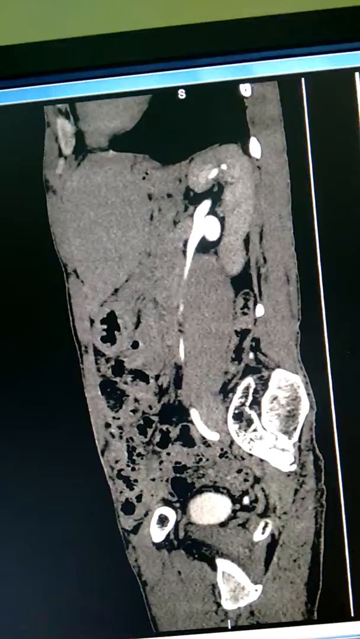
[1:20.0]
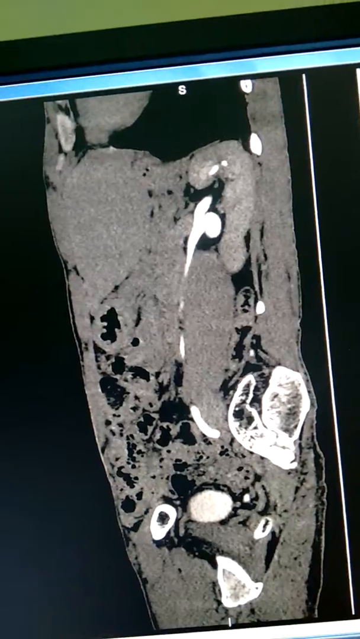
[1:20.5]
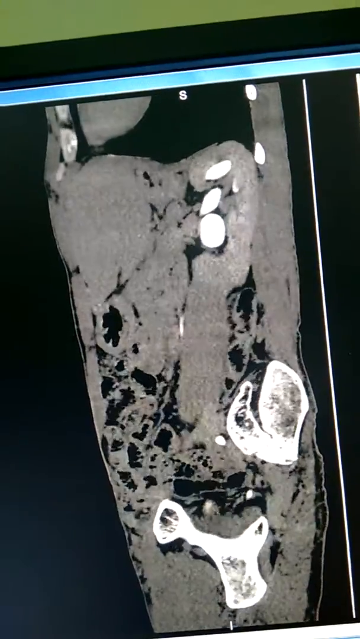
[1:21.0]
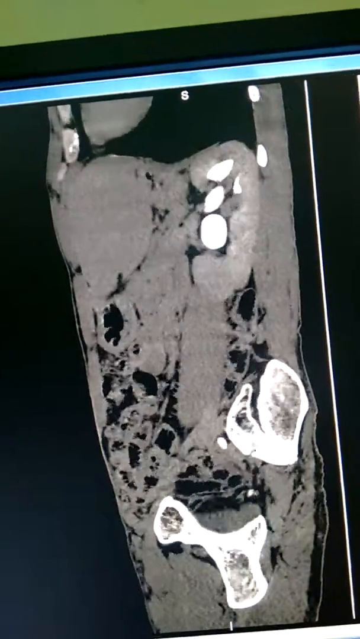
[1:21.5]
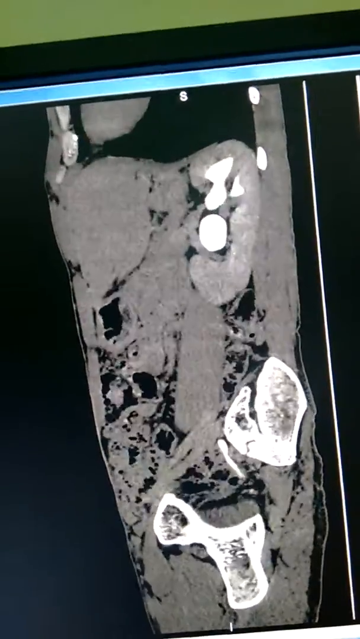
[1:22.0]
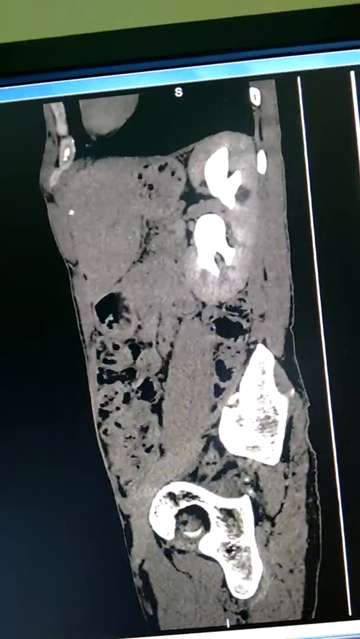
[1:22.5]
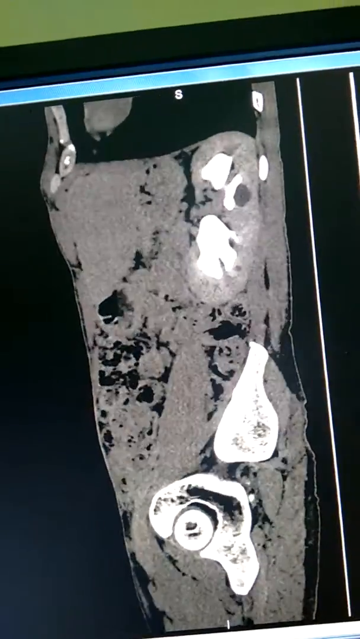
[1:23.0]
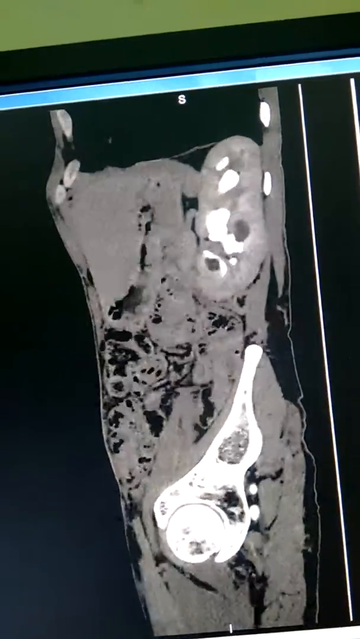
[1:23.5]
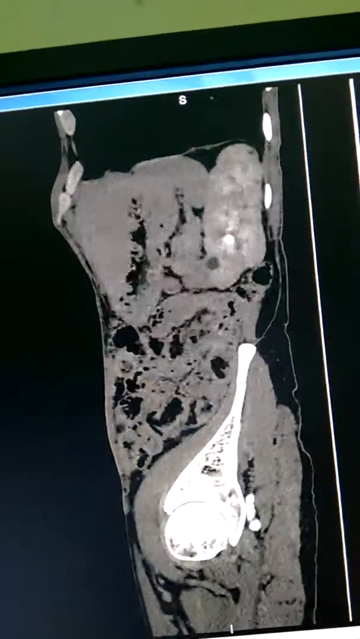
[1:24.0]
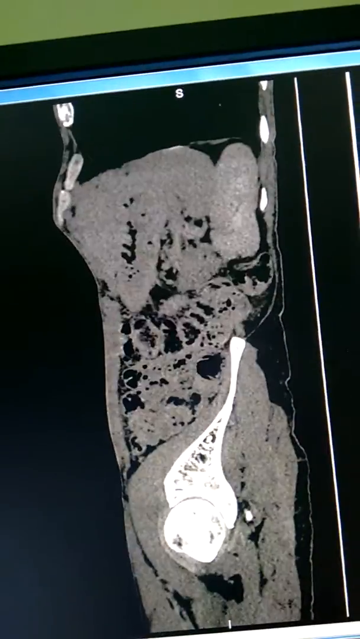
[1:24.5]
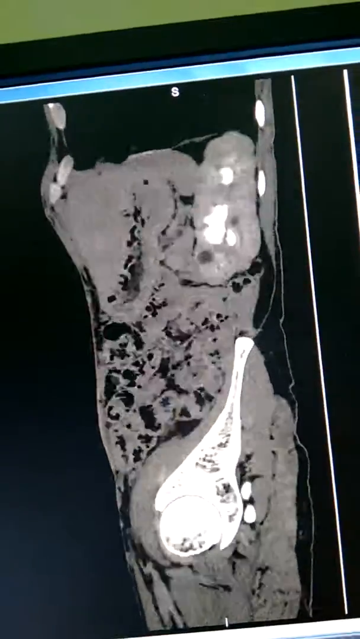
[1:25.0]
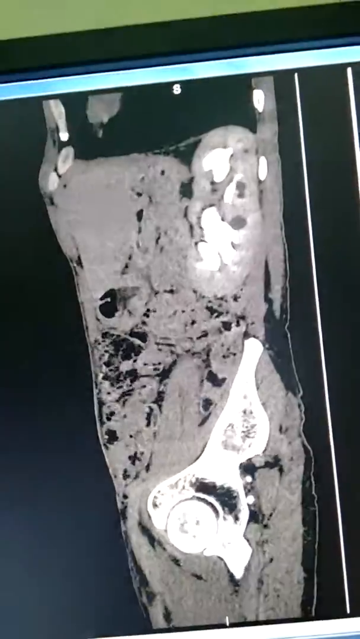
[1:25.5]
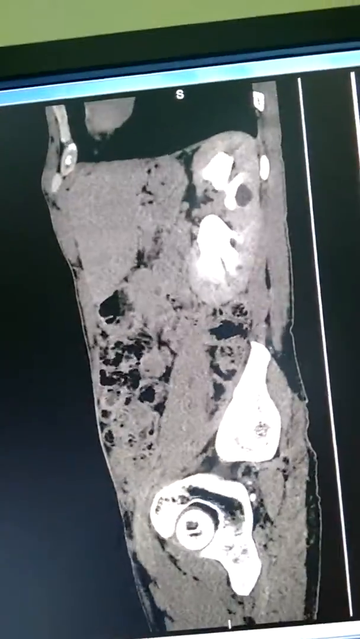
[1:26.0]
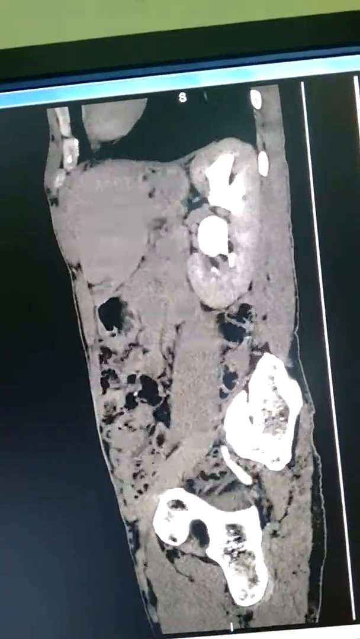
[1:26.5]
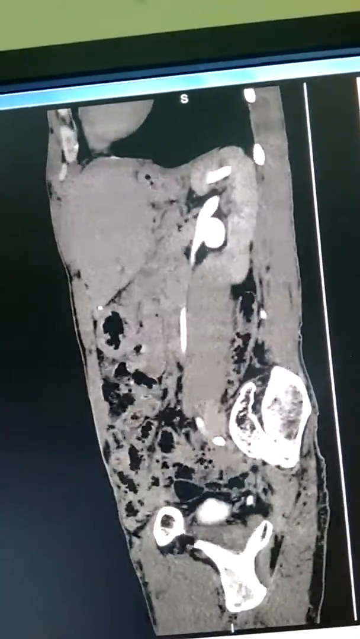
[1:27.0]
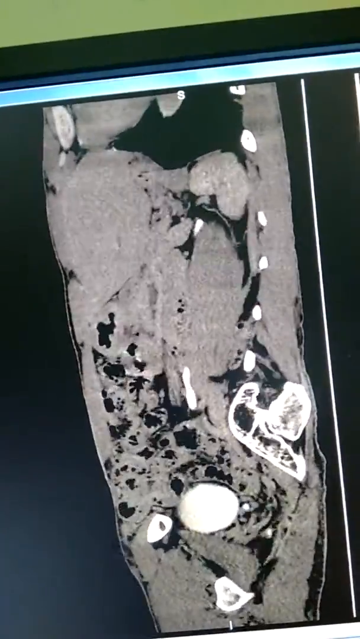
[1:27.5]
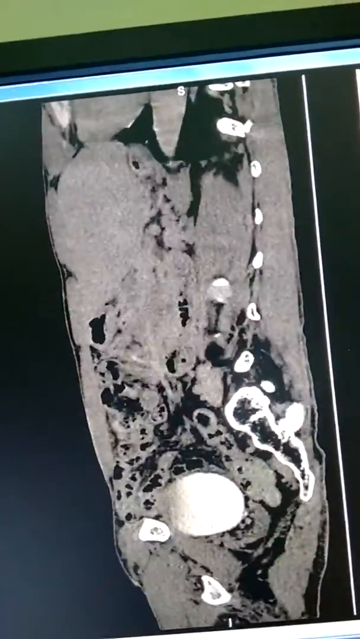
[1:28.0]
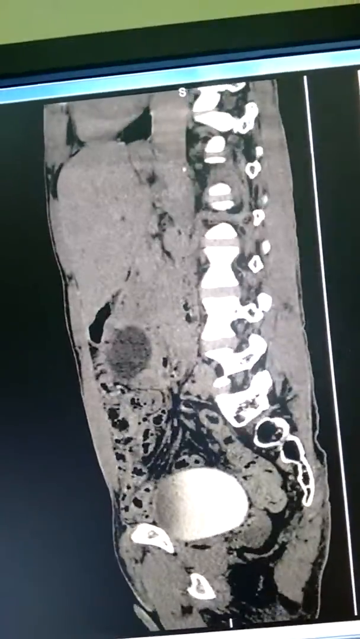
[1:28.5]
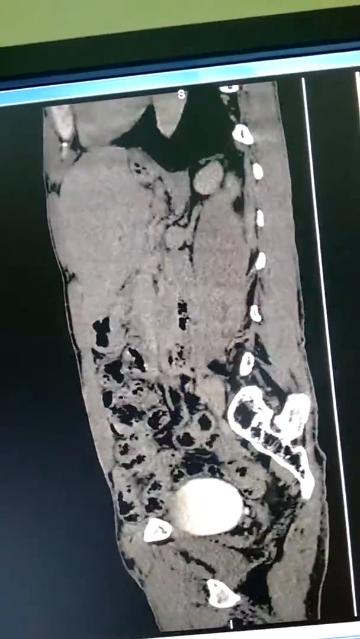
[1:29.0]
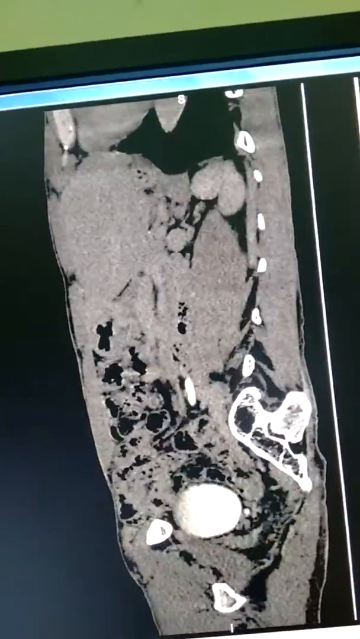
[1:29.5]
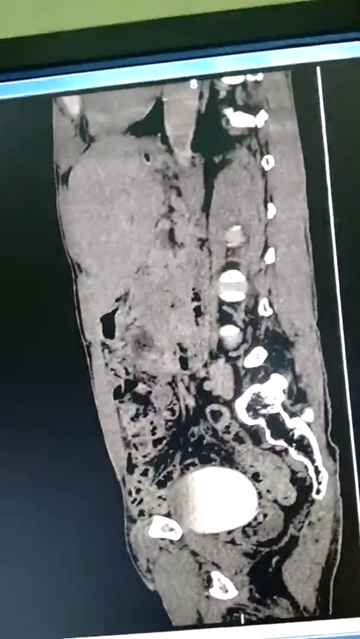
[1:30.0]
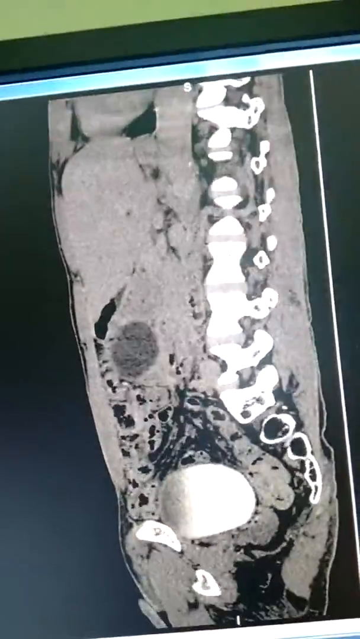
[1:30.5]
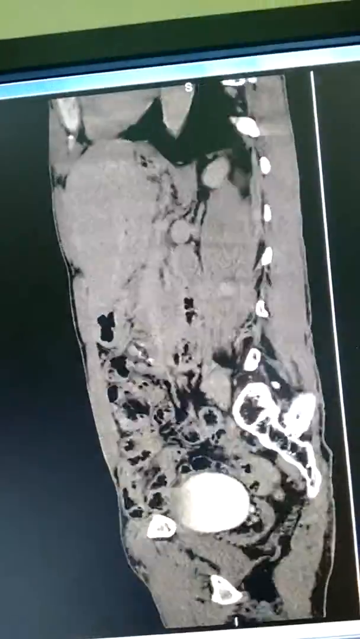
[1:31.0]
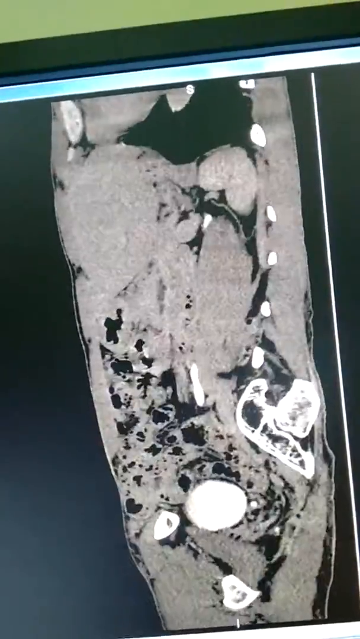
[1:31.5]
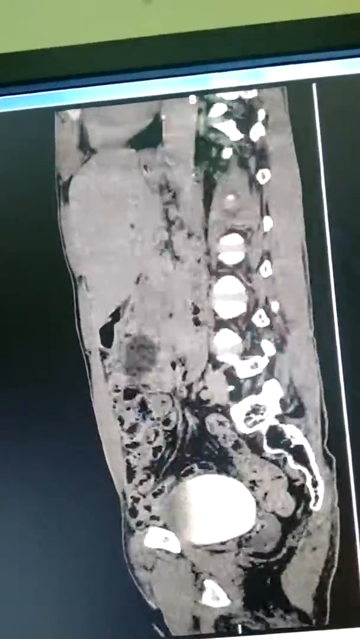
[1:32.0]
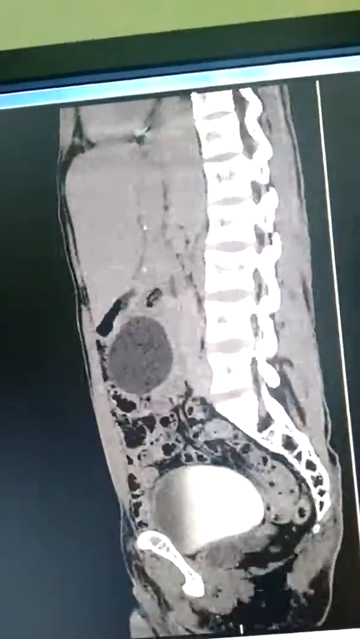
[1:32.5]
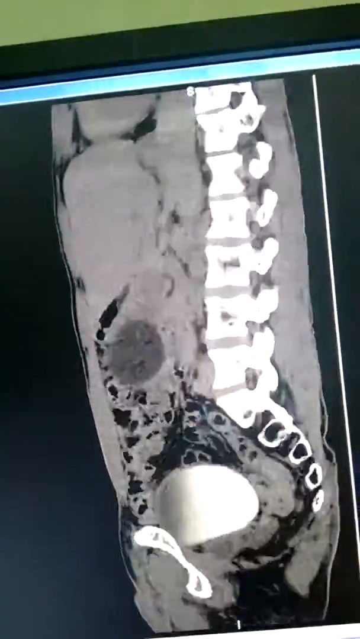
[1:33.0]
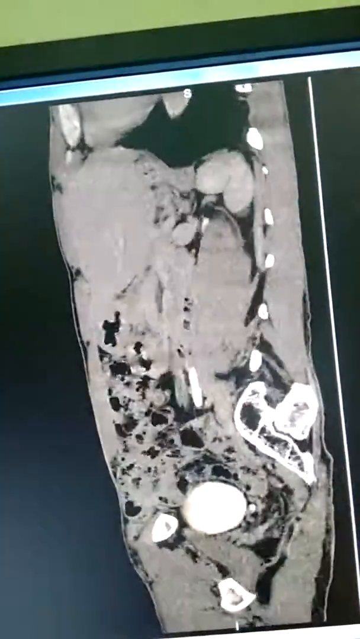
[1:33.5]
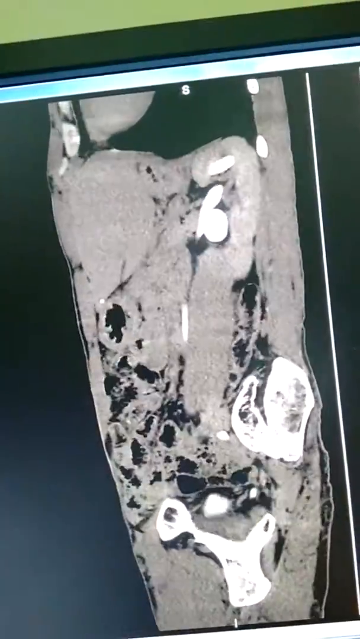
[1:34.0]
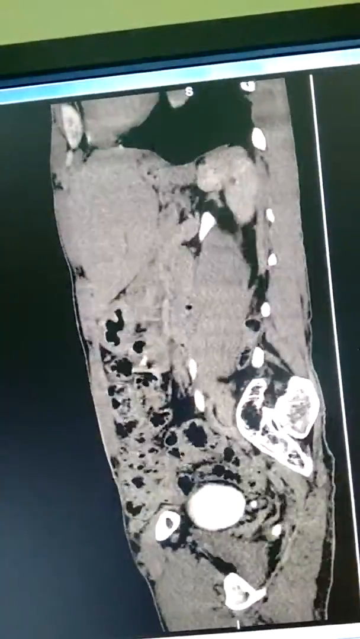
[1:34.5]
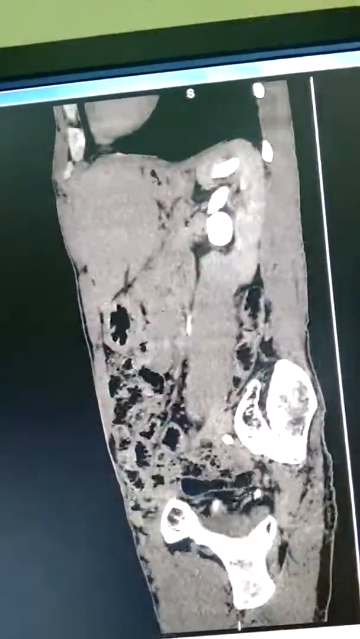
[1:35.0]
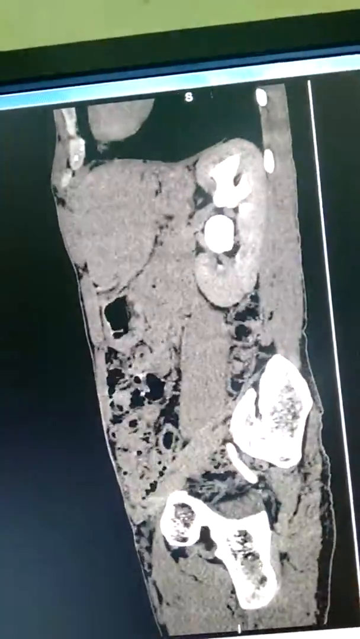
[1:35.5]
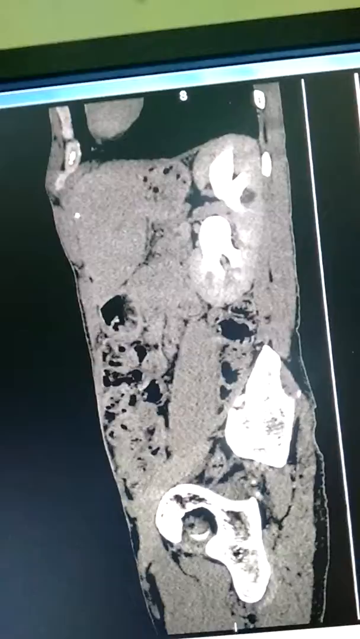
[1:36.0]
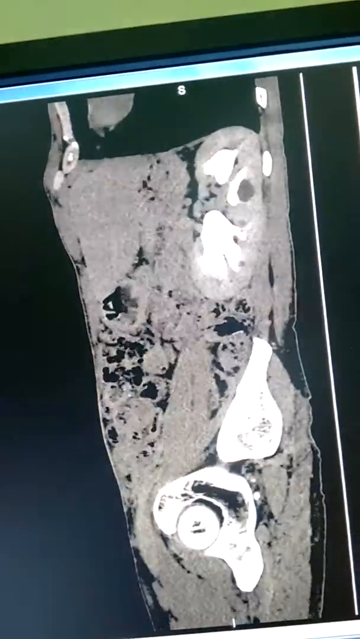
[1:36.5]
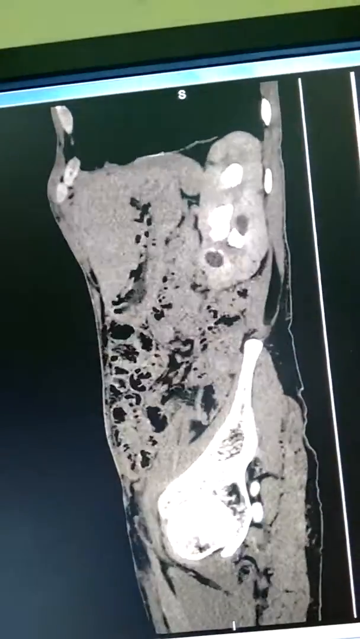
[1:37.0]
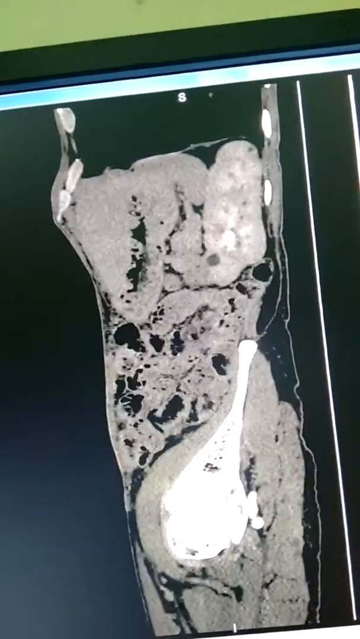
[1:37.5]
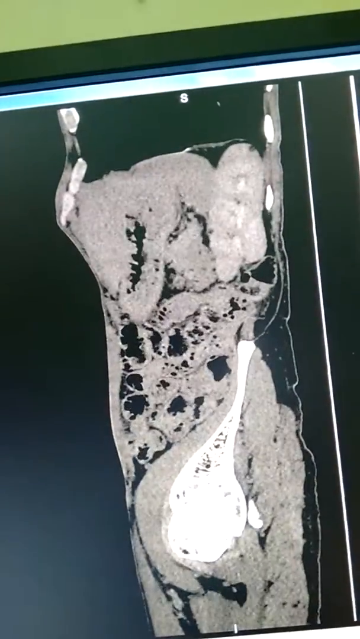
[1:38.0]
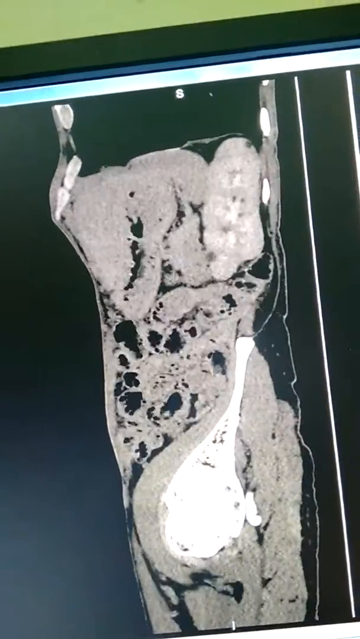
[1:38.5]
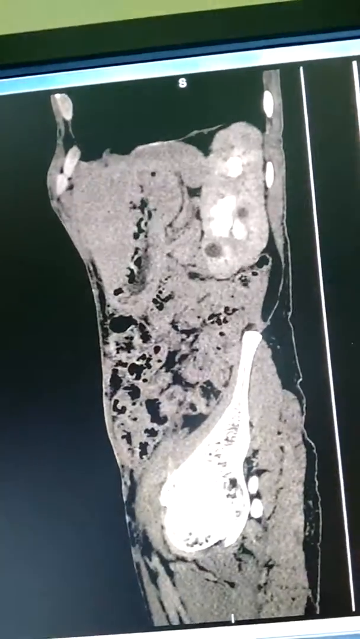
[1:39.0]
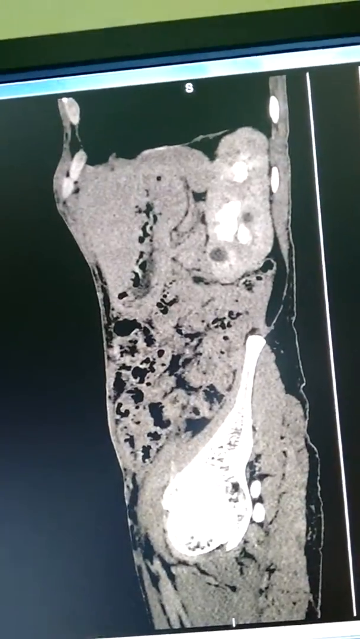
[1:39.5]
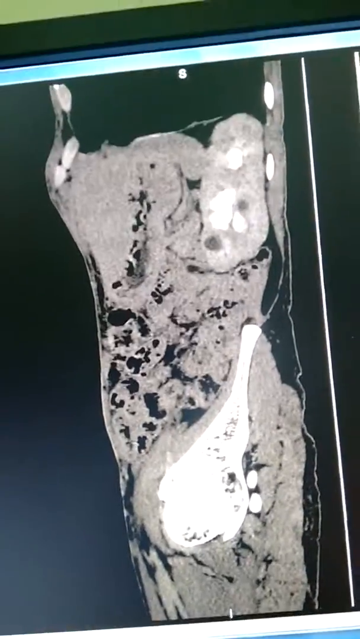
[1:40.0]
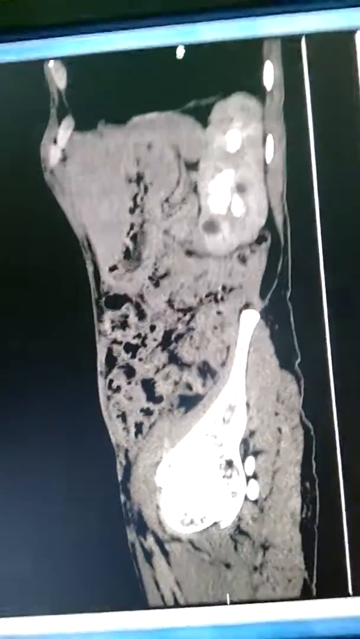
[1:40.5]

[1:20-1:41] A screen recording of someone's x-ray looks like a vertical phone recording. There are many little black holes inside the grey areas, probably representing parts that lack whatever the x-ray is trying to capture. The bones appear white when the spine comes in. Two white straight lines are next to the x-ray, probably marking the area being viewed. The letter S is on top of the x-ray, and the wall behind is green. The vertical phone recording is shaky. Some light hits the screen, making it a lighter black towards the bottom, probably from a room light since it is not a full screen capture.